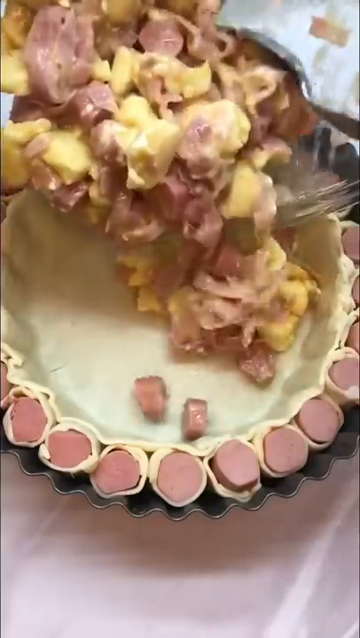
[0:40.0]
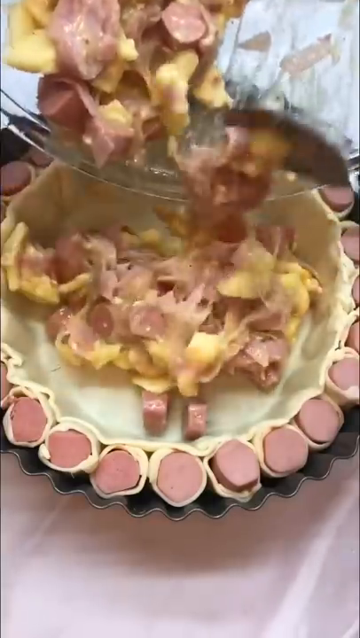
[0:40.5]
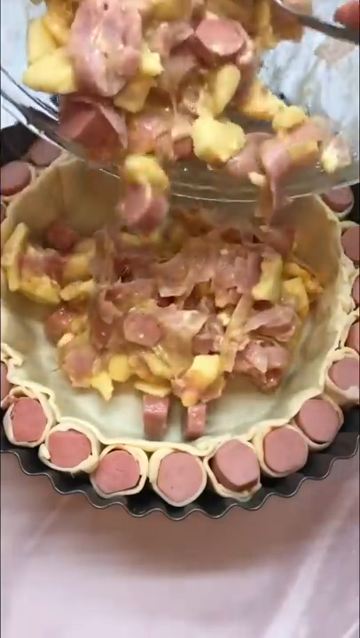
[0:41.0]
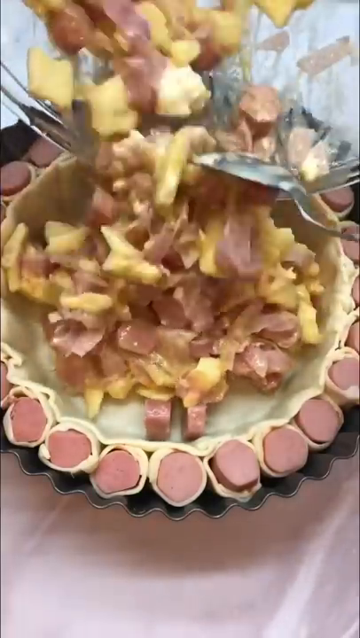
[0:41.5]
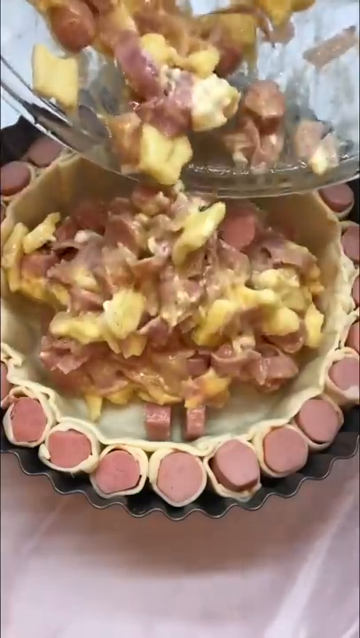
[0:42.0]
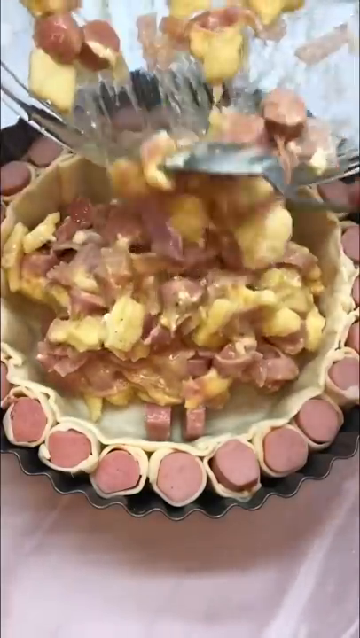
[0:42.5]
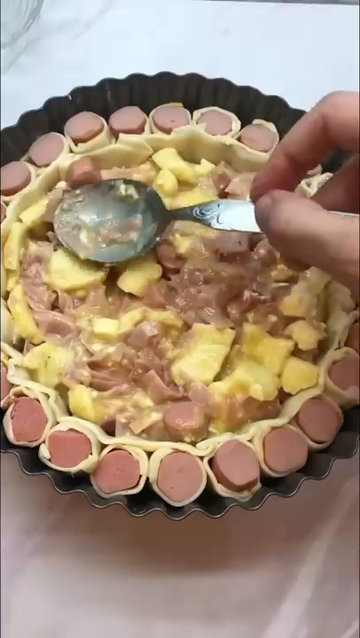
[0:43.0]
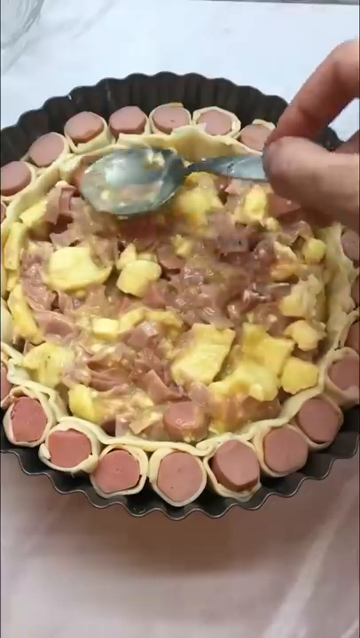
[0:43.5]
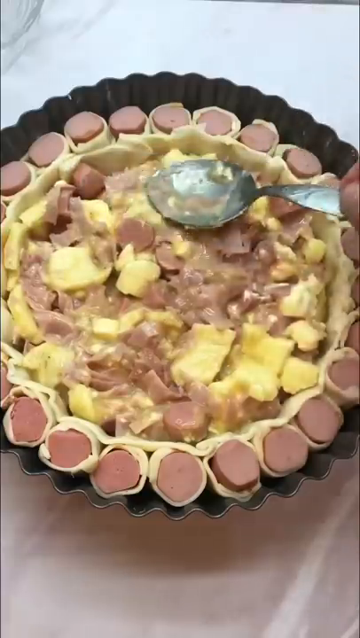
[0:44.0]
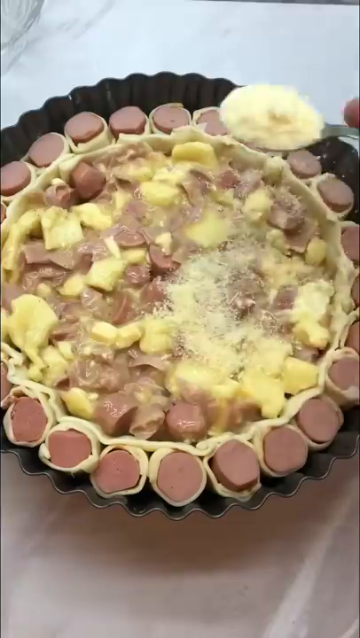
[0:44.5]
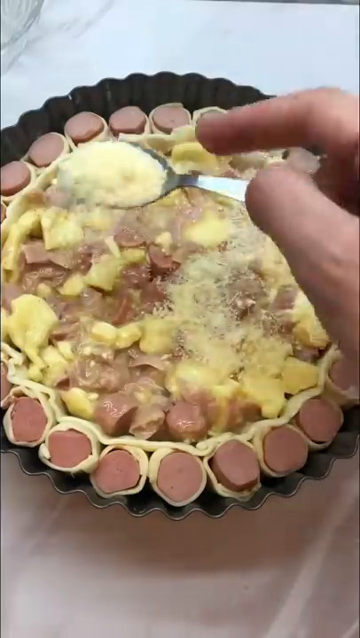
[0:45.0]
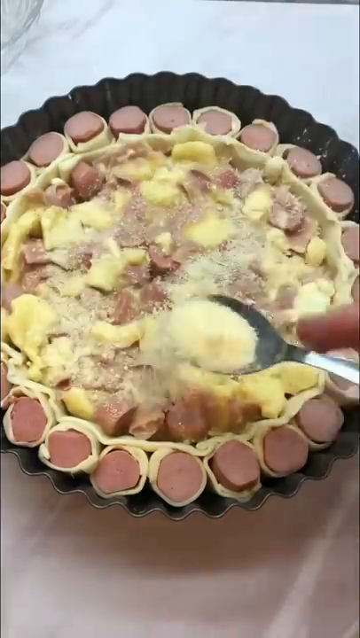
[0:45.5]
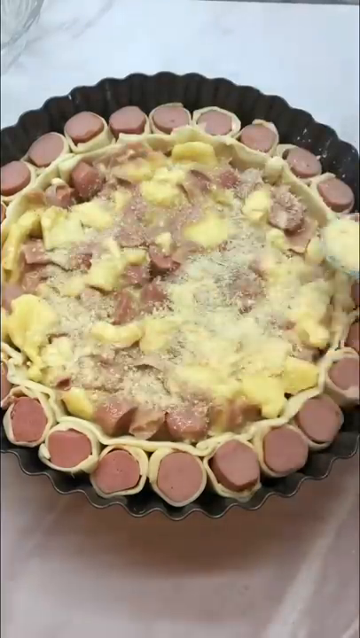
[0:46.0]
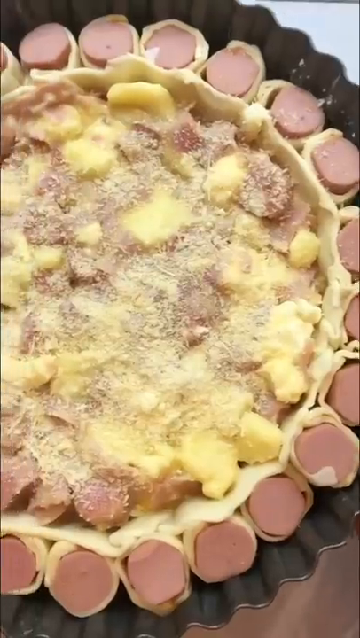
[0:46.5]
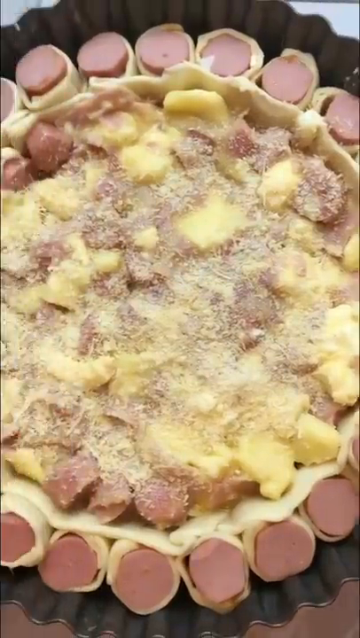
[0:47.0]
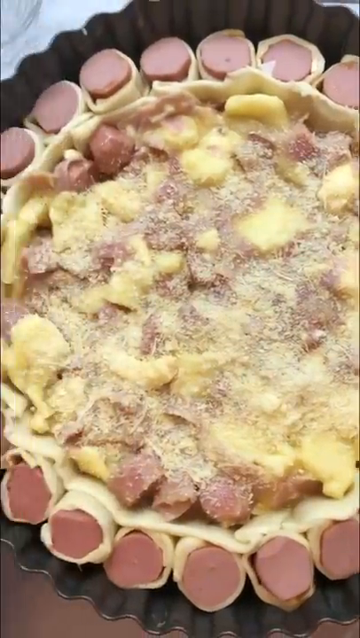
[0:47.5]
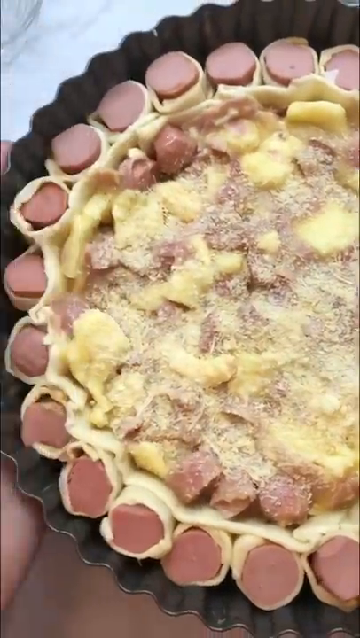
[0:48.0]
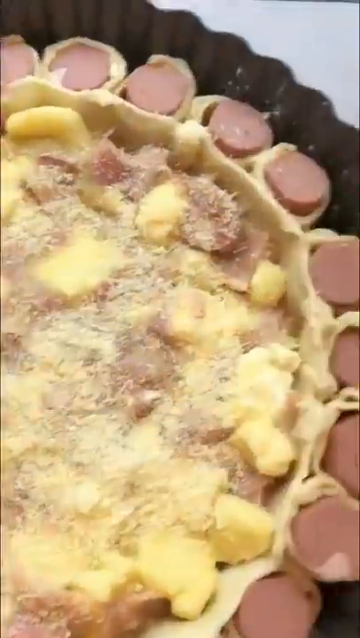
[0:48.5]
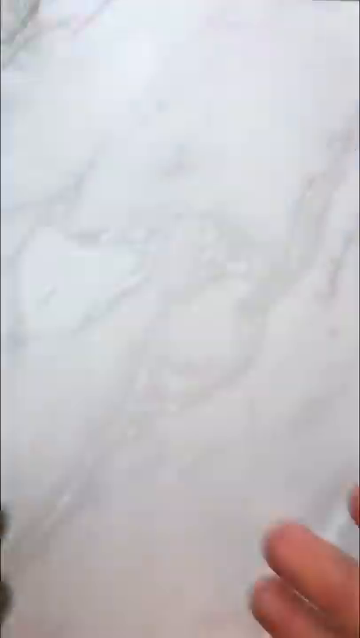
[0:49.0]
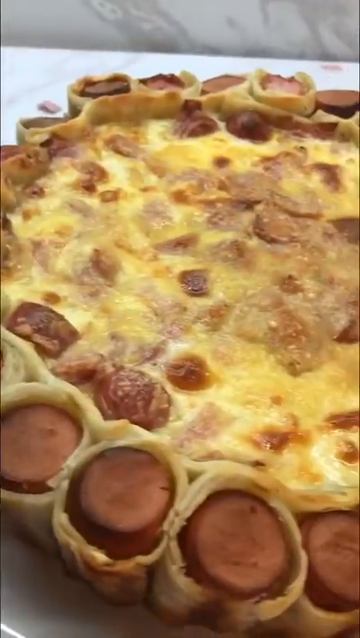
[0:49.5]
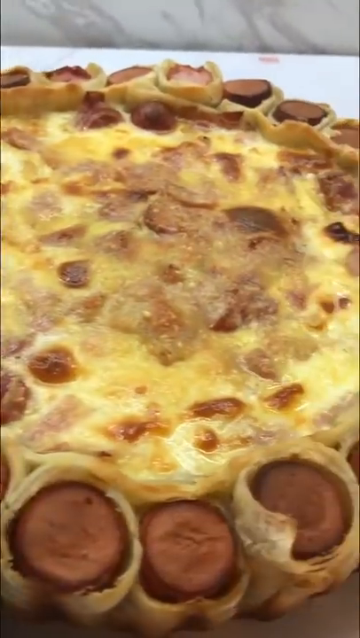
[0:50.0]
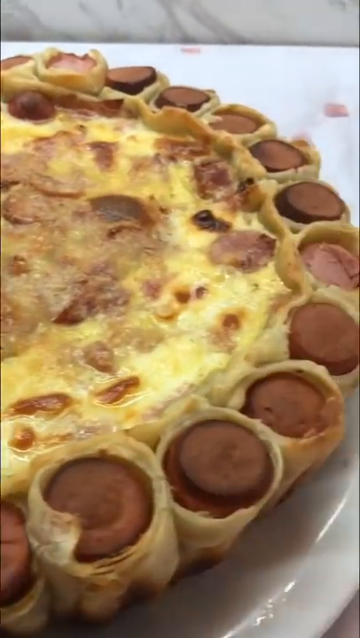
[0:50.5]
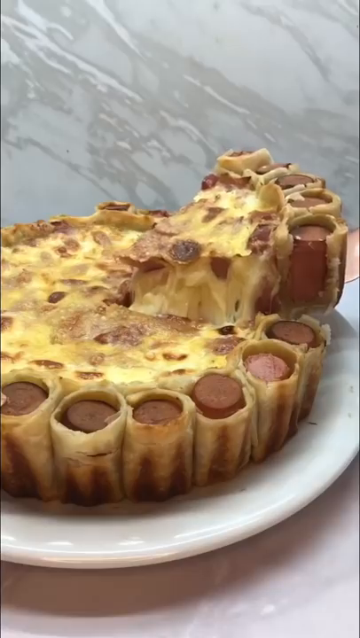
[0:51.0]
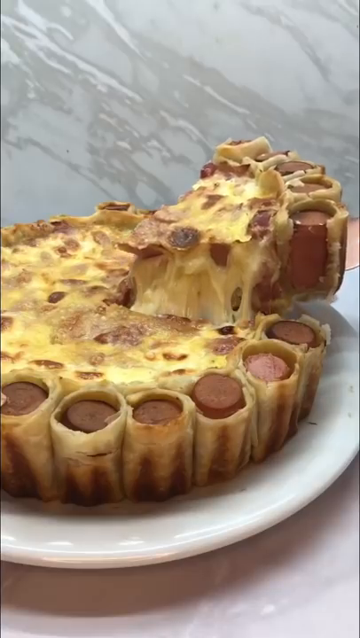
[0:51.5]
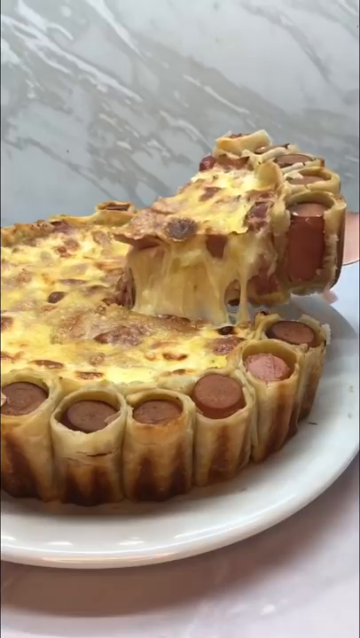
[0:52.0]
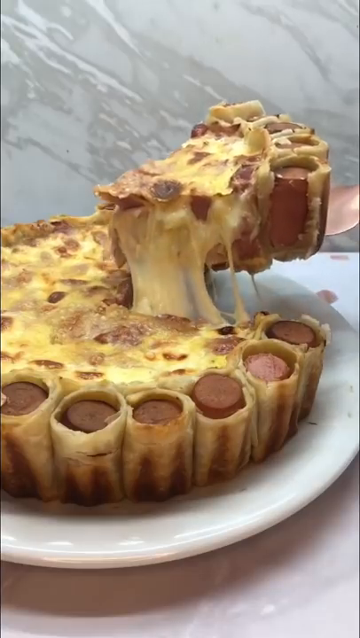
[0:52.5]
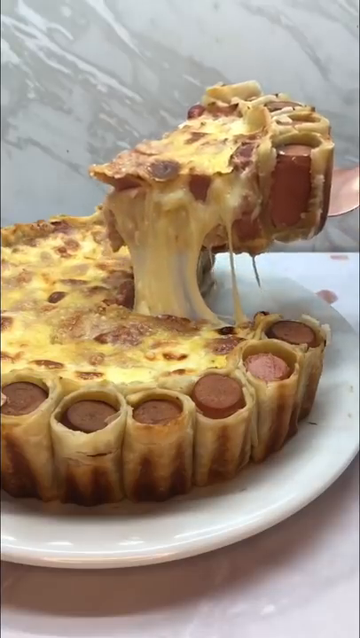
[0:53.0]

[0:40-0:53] The hands pour the mixture into the pie crust in the pan, using a metal spoon to pull it out of the glass container, and smooth it out. They then use the spoon to put some kind of light powder on top as seasoning, possibly onion powder. When the dish is next seen, it has been totally cooked, presumably in an oven: the dough is golden and the top also looks golden. The person cuts out a big triangular wedge like a pie slice and slowly lifts it out of the pan, showing the full cooked product, with what is apparently cheese pulling apart from the rest in the pan.